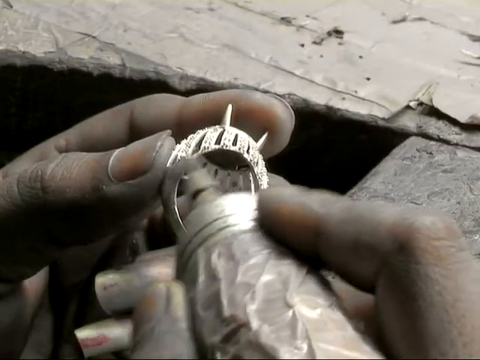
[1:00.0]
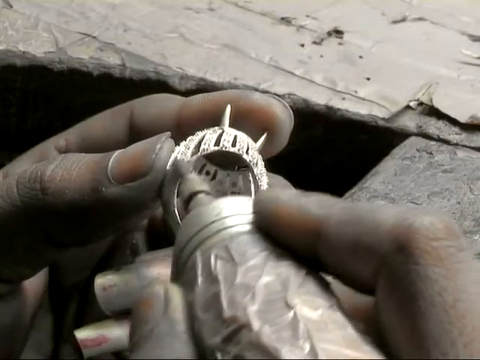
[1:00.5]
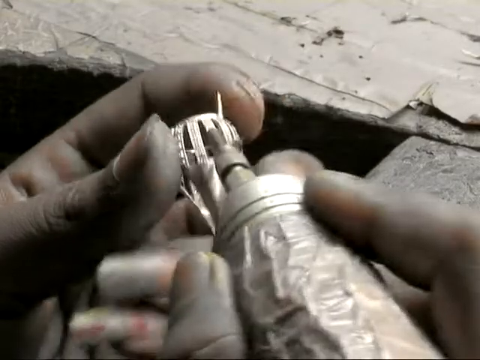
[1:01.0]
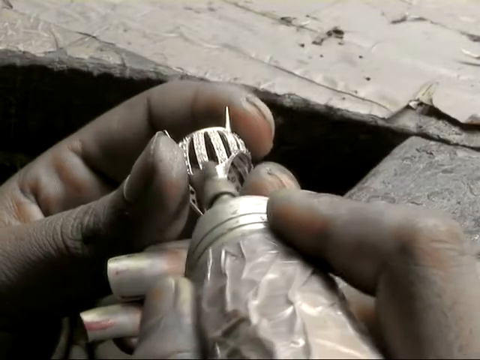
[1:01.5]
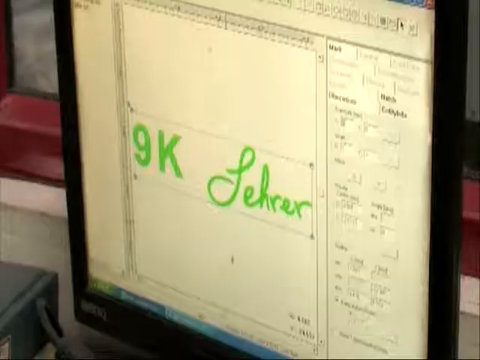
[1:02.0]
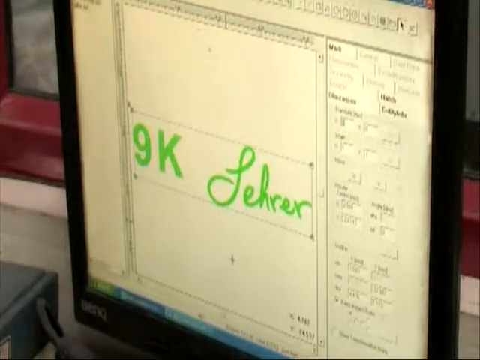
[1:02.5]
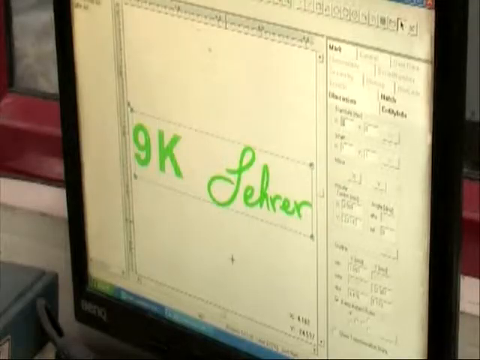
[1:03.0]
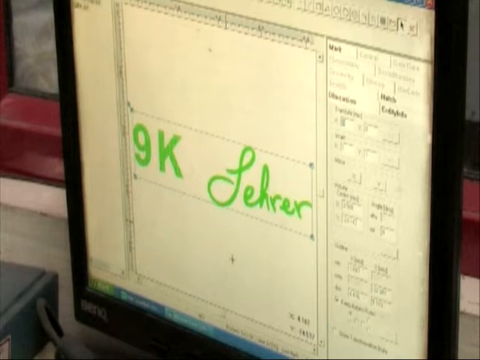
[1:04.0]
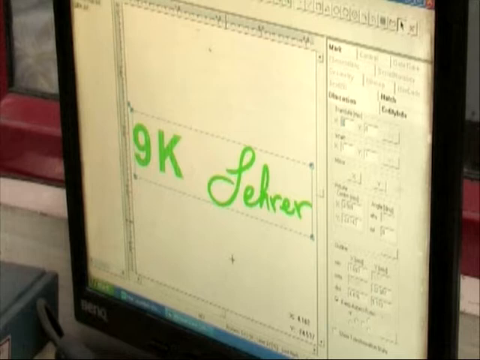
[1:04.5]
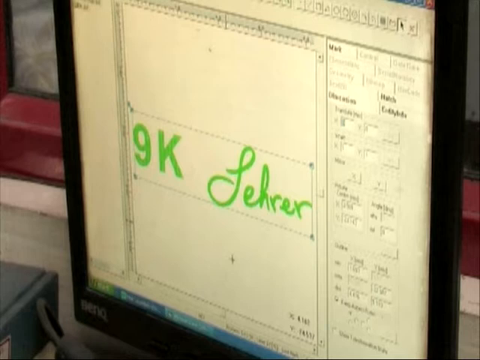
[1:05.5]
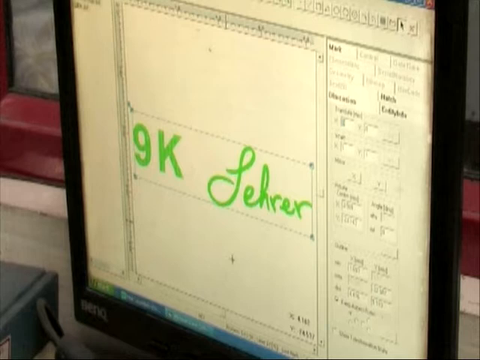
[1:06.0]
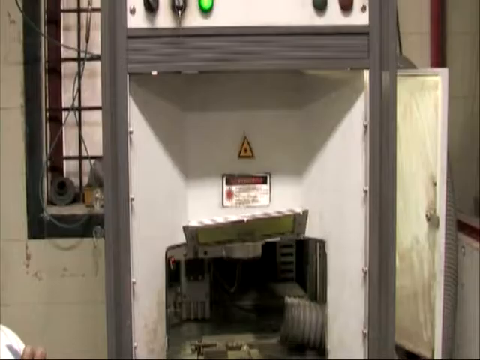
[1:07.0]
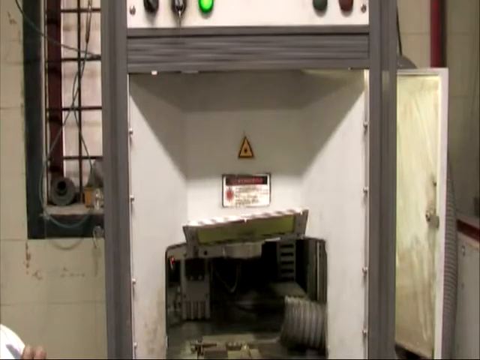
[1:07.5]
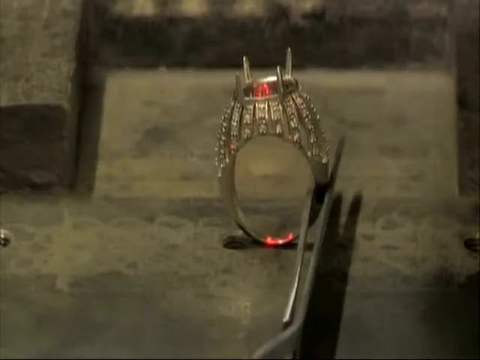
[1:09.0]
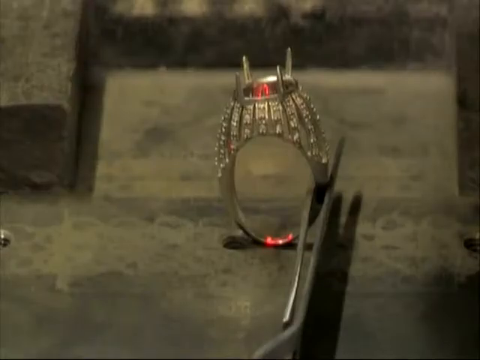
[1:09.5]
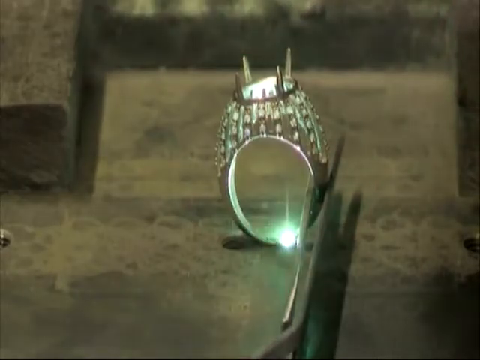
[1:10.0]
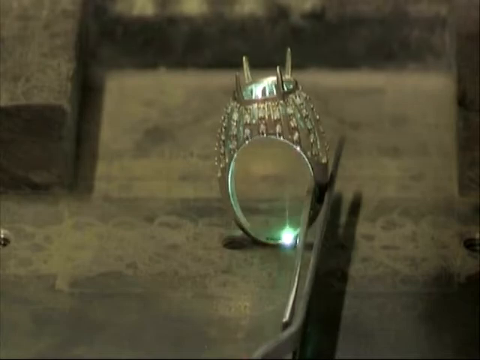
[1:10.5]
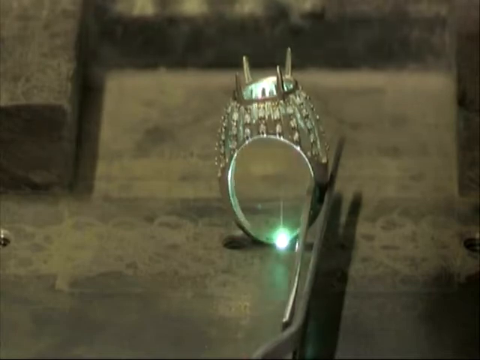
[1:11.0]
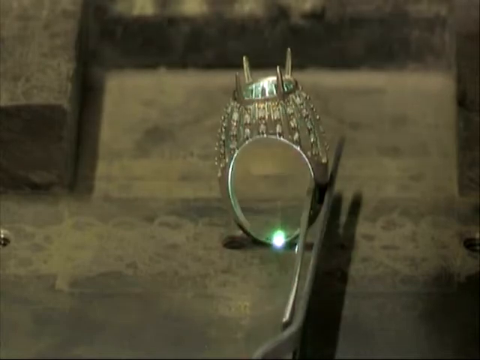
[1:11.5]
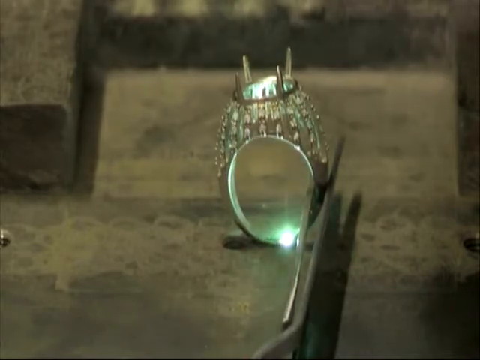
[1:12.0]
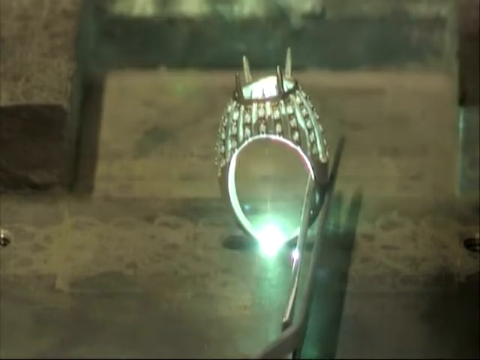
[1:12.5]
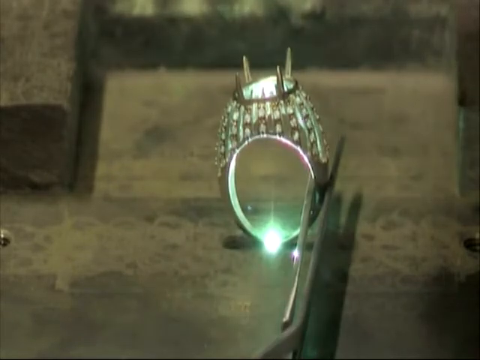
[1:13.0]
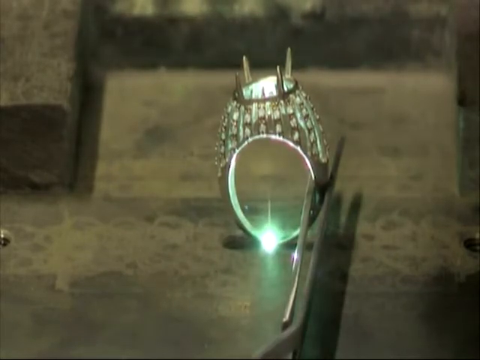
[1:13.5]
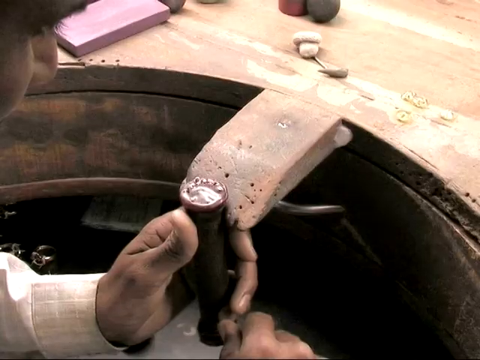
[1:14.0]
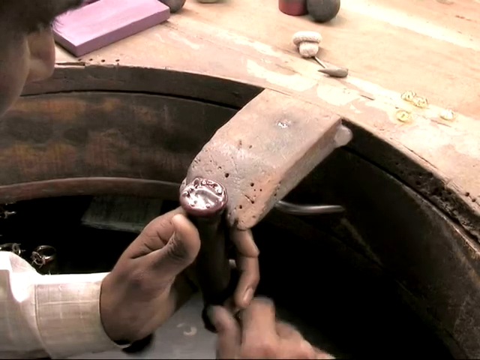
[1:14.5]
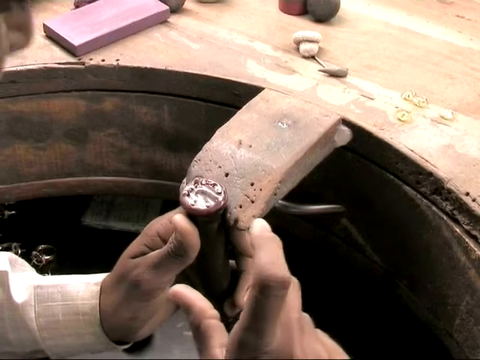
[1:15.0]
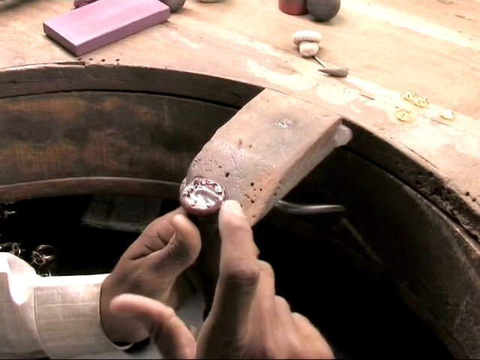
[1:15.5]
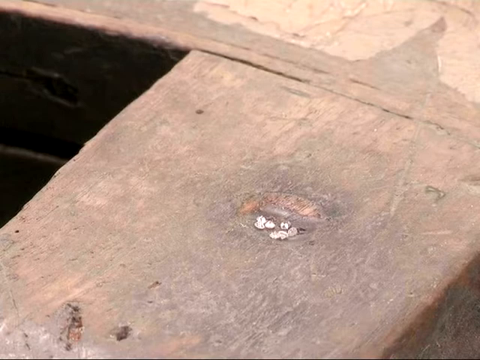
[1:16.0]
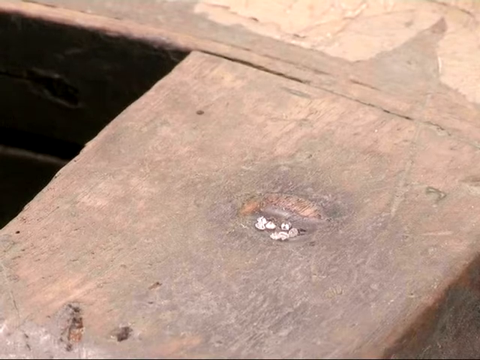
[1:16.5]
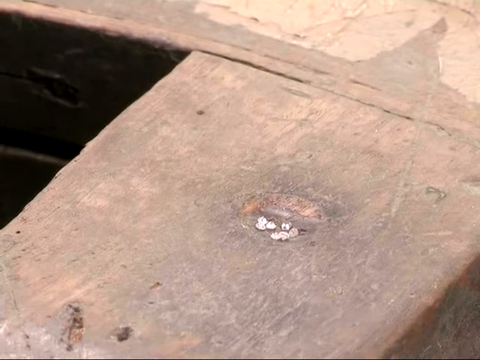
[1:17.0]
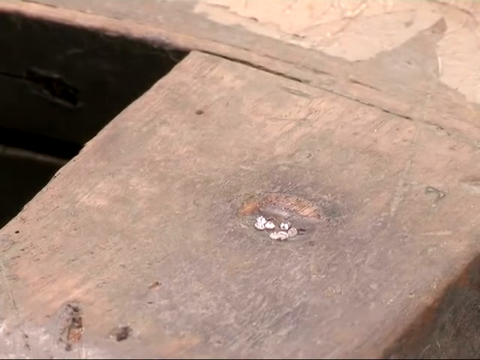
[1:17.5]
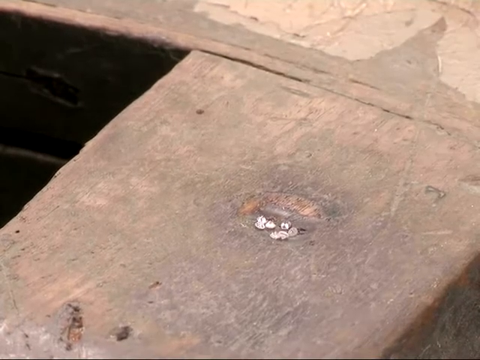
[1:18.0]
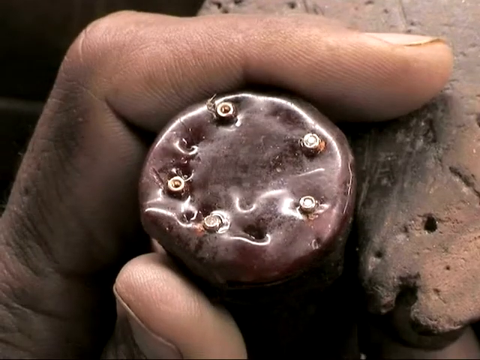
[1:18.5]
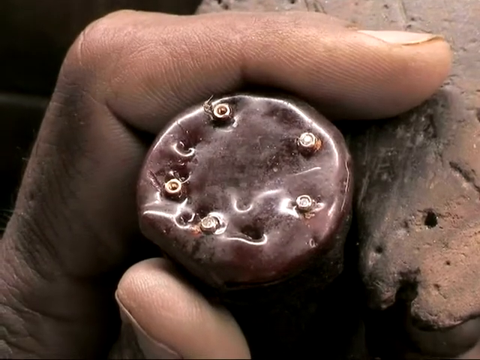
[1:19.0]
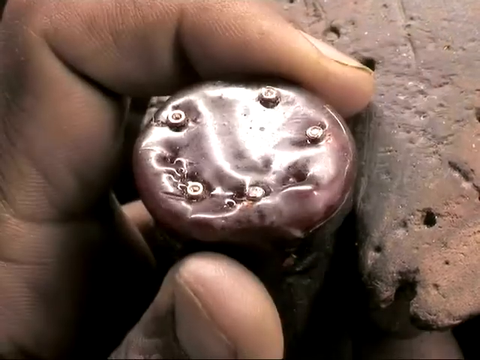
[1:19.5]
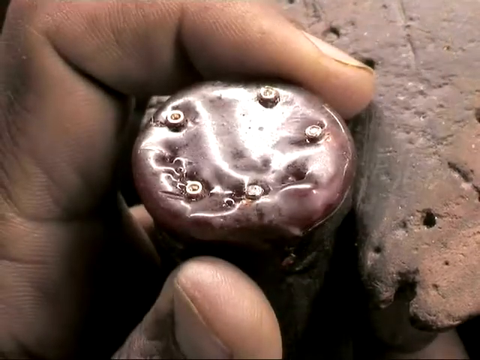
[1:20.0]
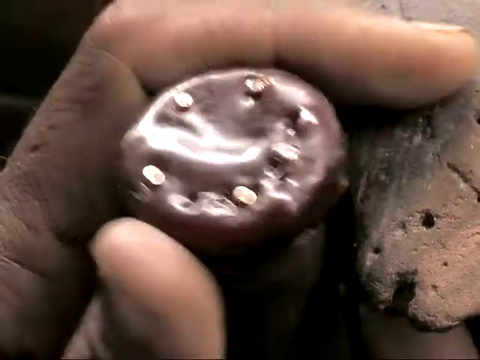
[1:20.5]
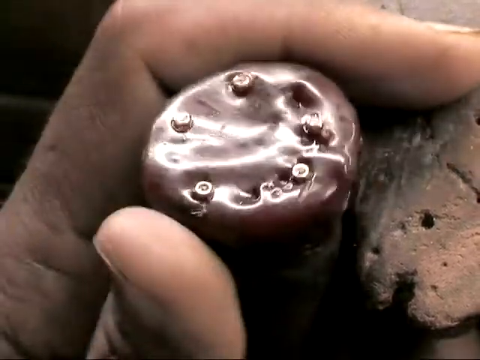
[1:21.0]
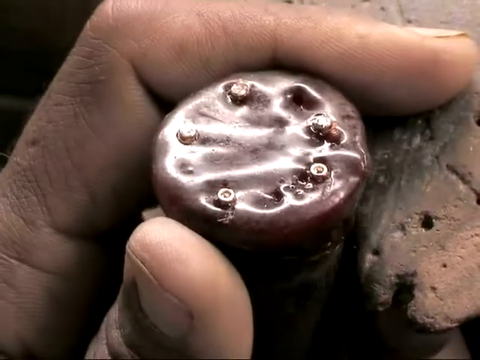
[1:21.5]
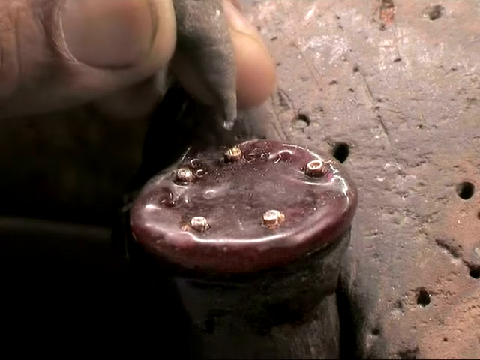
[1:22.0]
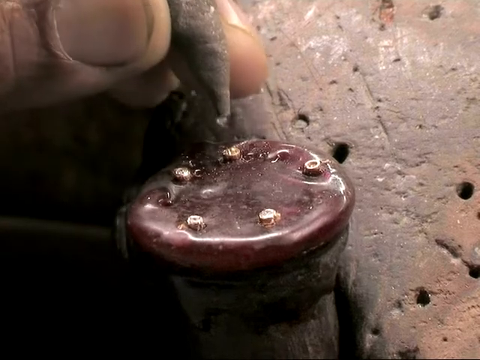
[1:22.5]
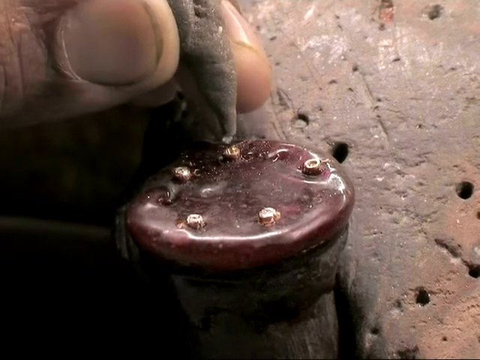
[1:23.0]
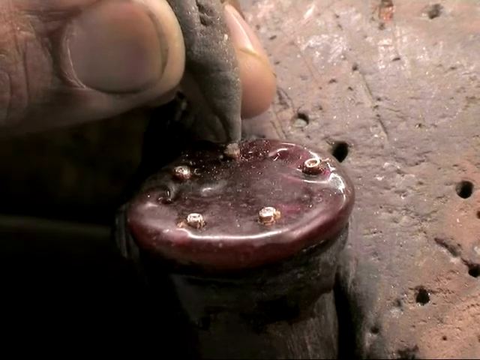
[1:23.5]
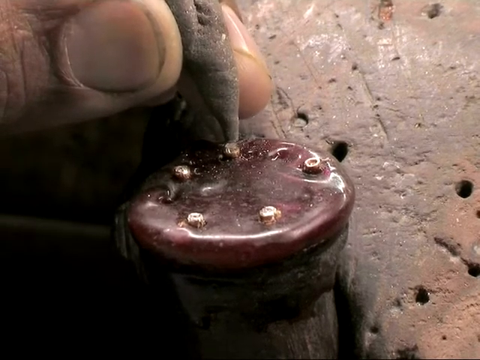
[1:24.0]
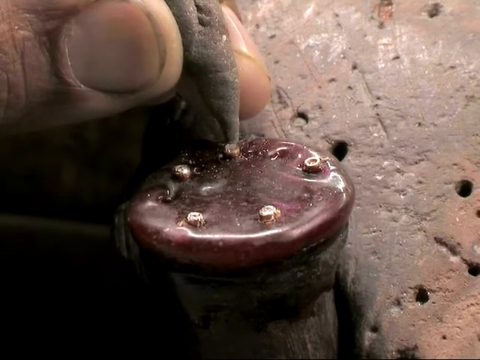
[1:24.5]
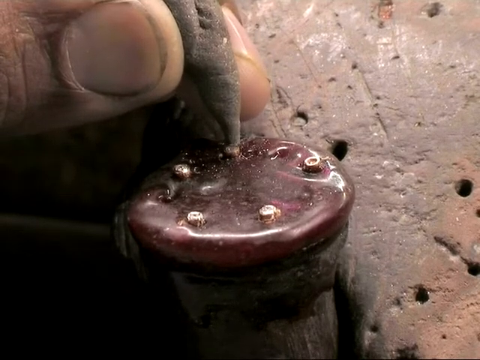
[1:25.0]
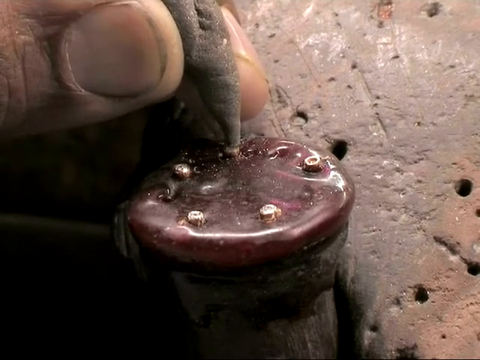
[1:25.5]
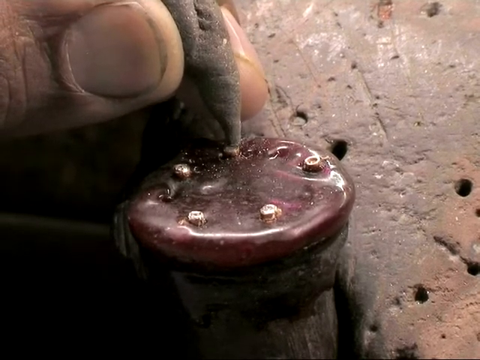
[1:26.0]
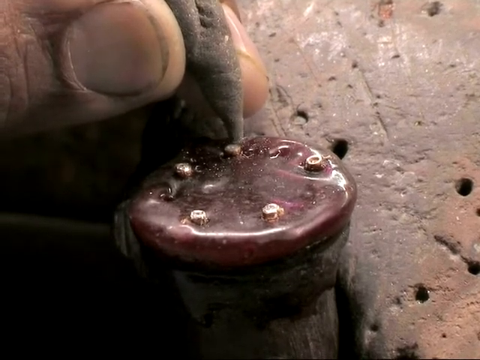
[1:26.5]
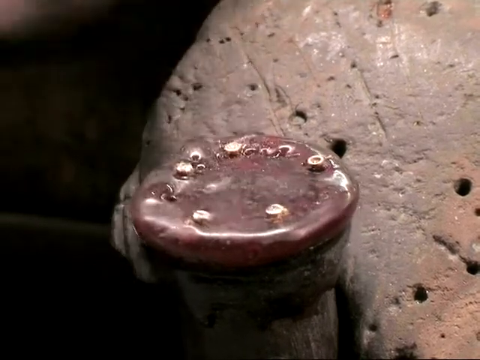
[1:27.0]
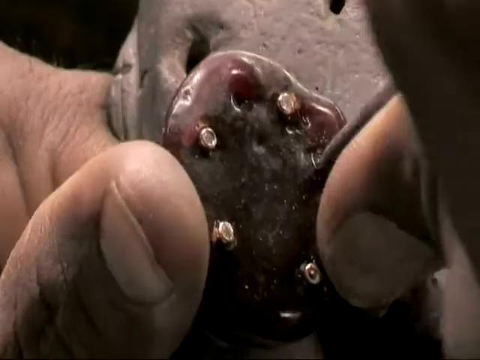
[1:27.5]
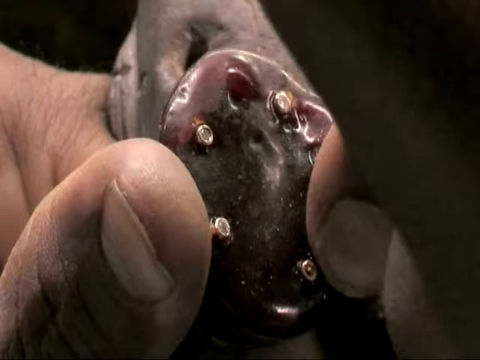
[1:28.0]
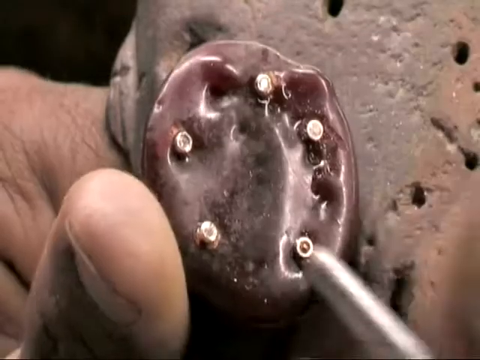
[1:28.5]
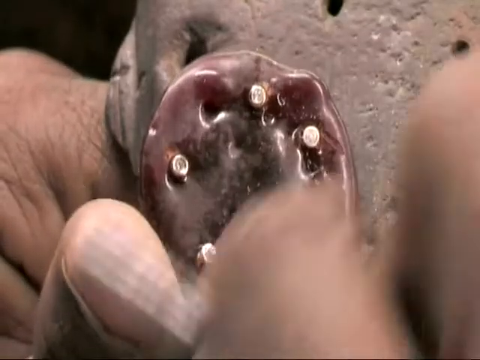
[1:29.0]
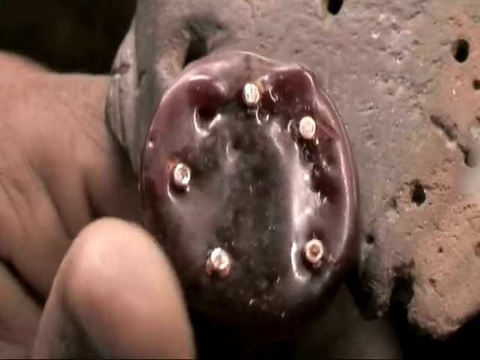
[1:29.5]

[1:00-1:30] The ring appears elegant, small and costly-looking. It has a light blue diamond in the middle with a spot of silver, and the band where the finger goes in is coated with silver bands and diamonds, which makes it look like a fence. The name of the ring is the Taurus Ring by Glenn Lira. It is apparently aimed at people who are engaged or planning a marriage, or possibly a gift as a promise ring. The video shows how the ring was designed, and as the camera zooms further away, the design is seen to be on a laptop. Then a man seems to be shaping the ring on some type of rock.